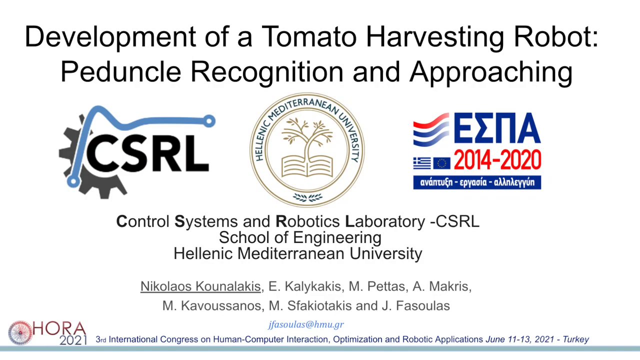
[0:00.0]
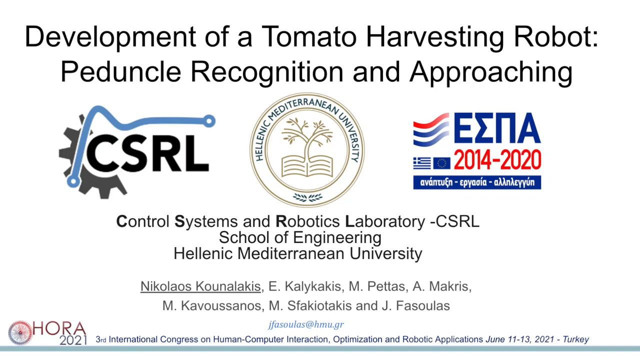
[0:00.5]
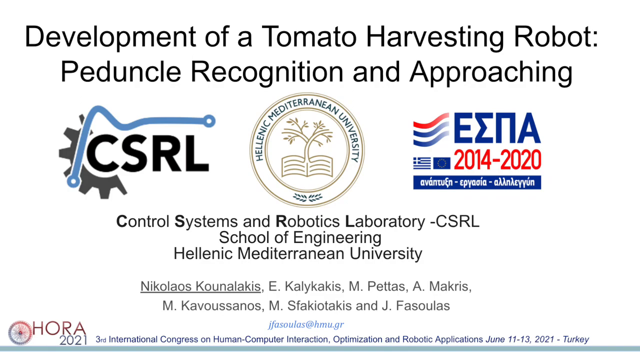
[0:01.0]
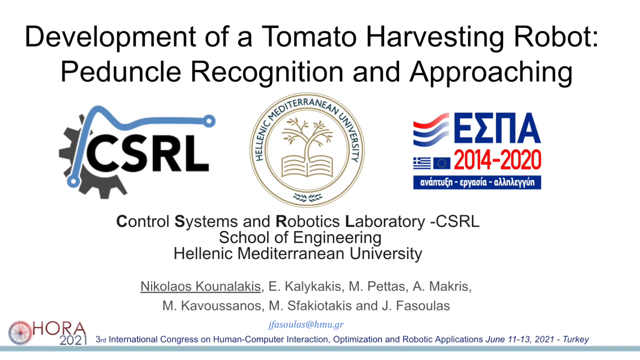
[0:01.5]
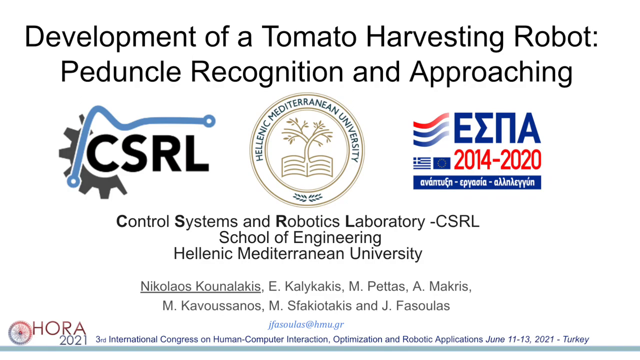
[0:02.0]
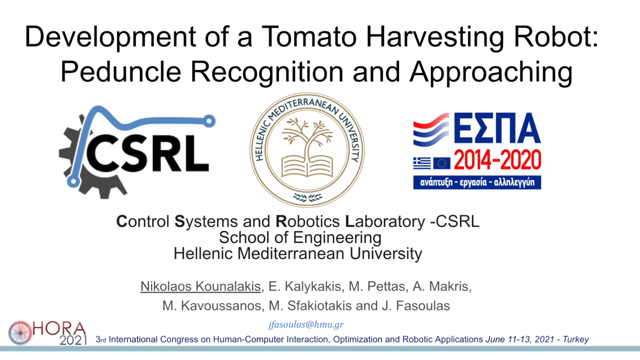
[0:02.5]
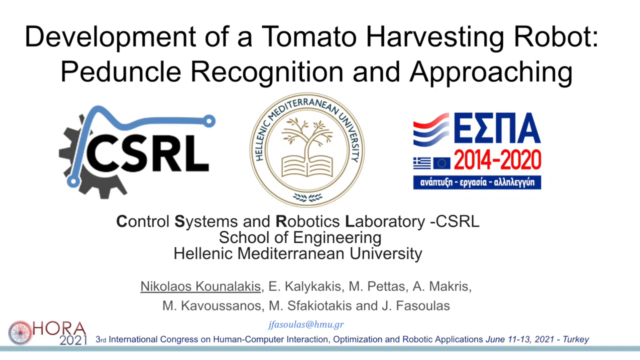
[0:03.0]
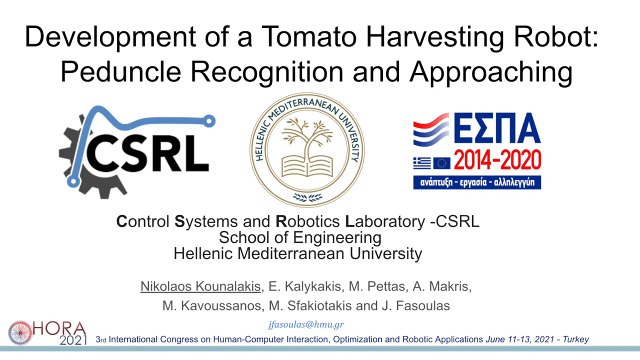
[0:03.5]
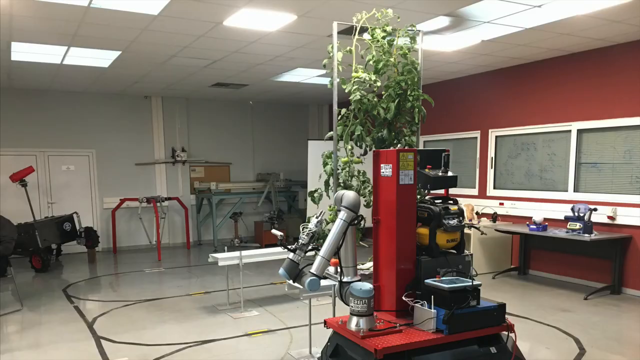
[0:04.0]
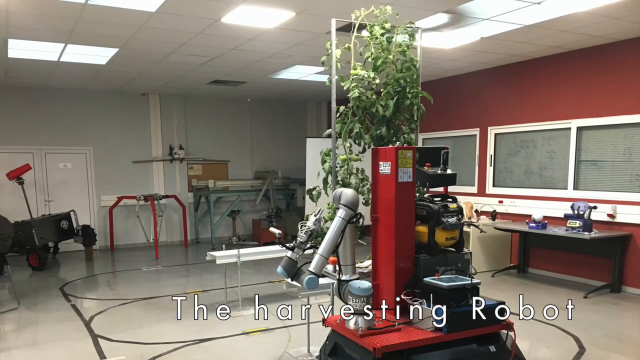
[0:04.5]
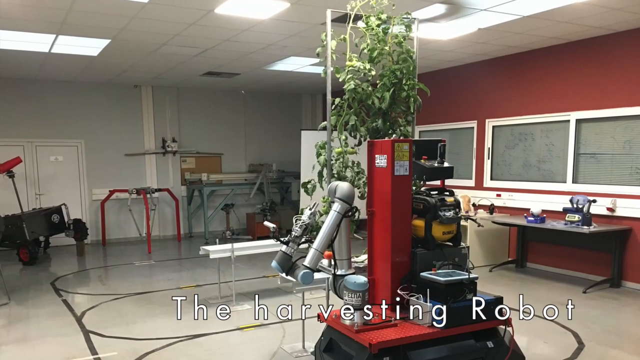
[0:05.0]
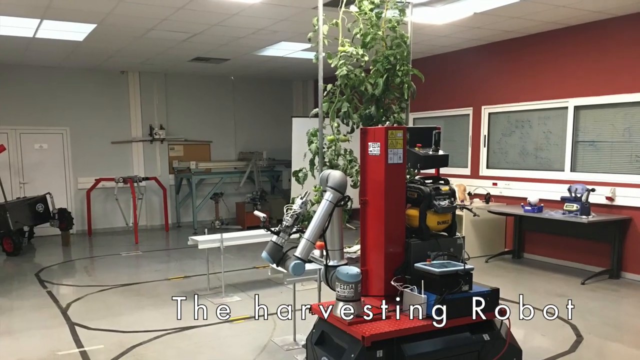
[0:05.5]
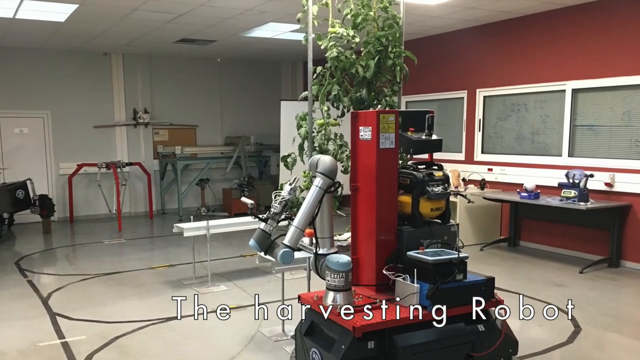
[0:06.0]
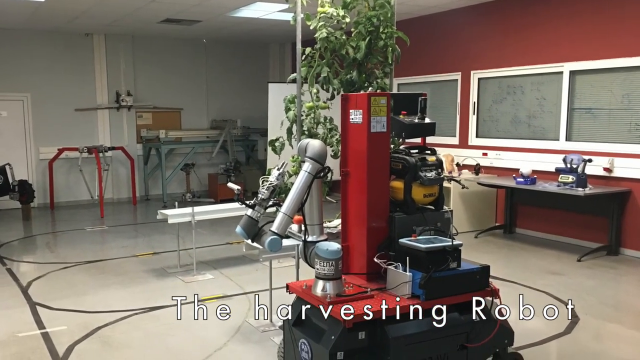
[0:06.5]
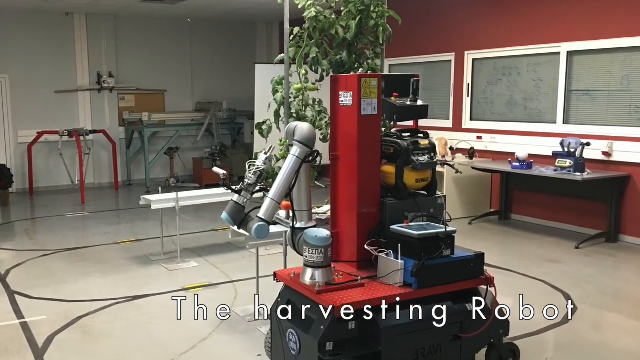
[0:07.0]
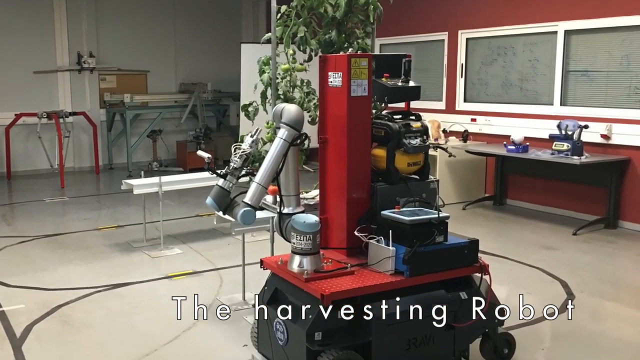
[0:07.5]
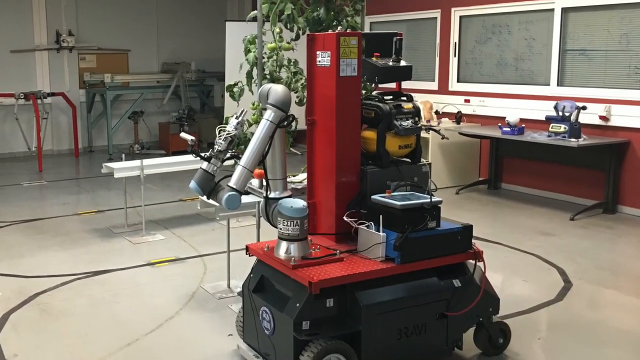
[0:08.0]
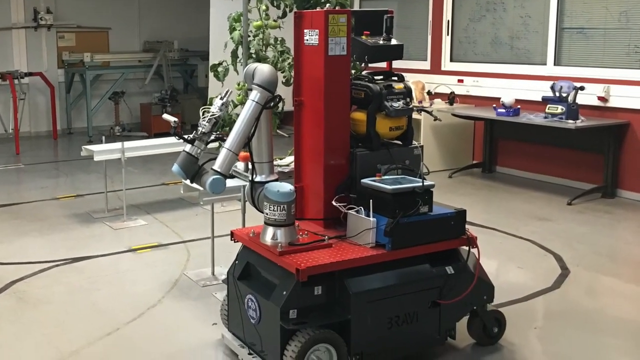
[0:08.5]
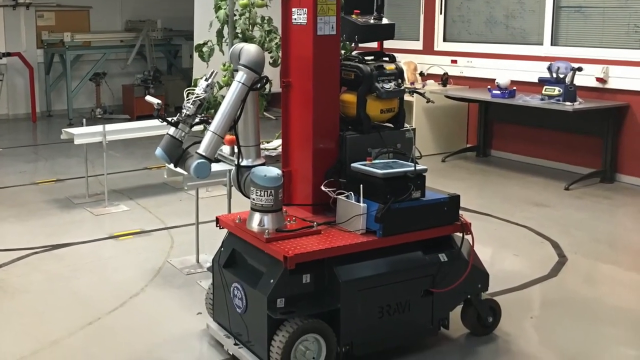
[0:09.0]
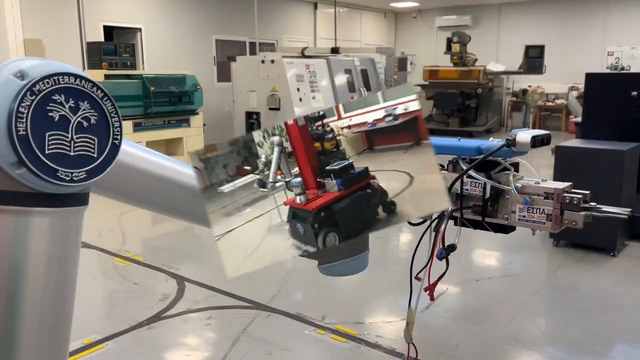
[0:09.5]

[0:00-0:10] The video opens on a still frame of what looks like a PowerPoint presentation. It has a white background and a title in black text that reads "Development of a tomato harvesting robot. Peduncle recognition and approaching." In the middle centre there are three different company logos, whose language looks like Greek. Below the logos, description text reads "Control Systems and Robotics Laboratory, CSRL, School of Engineering, Hellenic Mediterranean University." There is a list of names in Greek. The scene then changes to the inside of a laboratory area, with a robotic-looking piece of equipment in the centre.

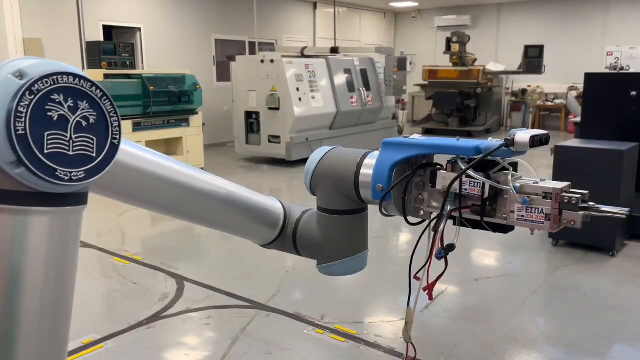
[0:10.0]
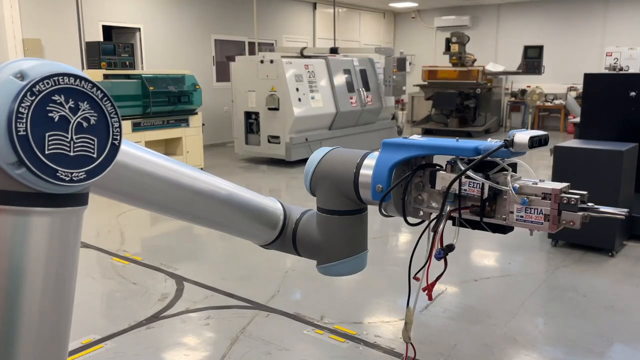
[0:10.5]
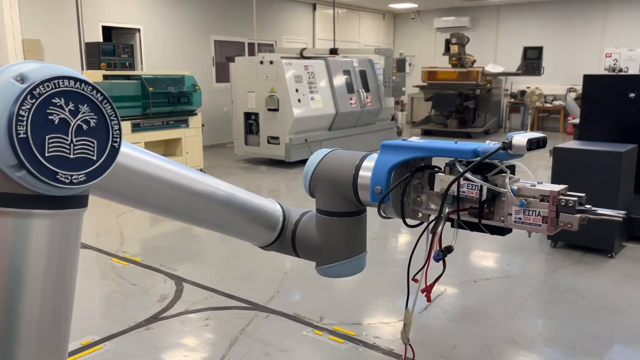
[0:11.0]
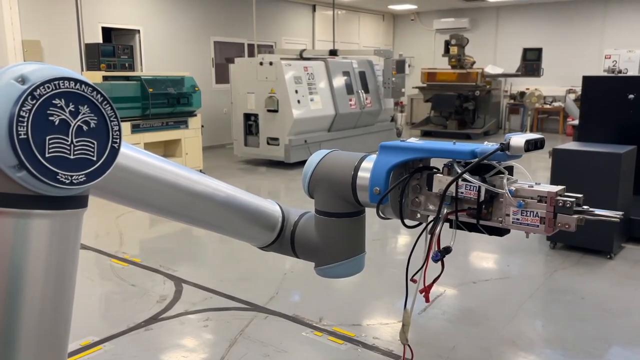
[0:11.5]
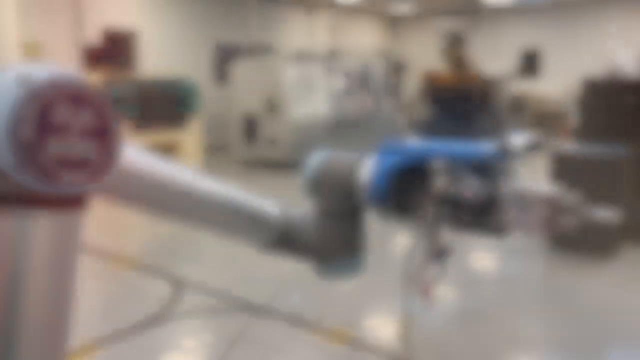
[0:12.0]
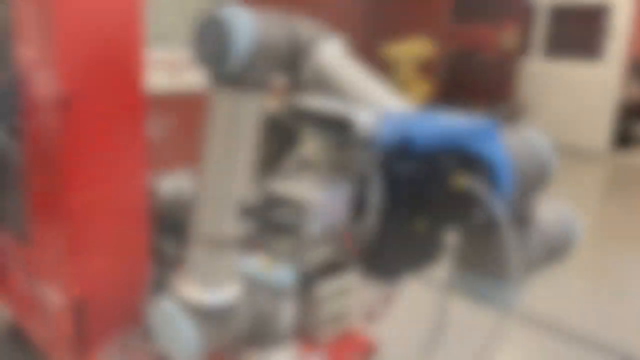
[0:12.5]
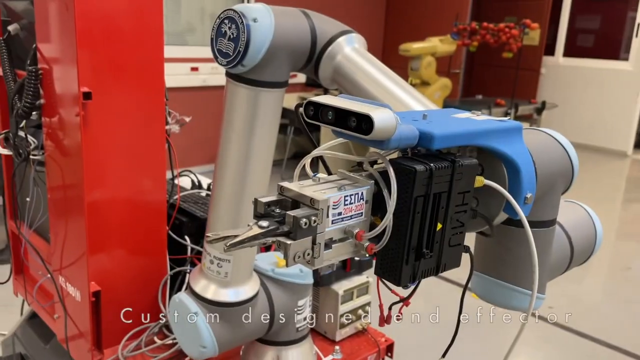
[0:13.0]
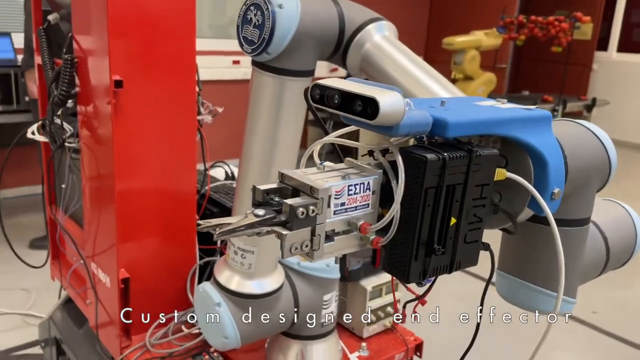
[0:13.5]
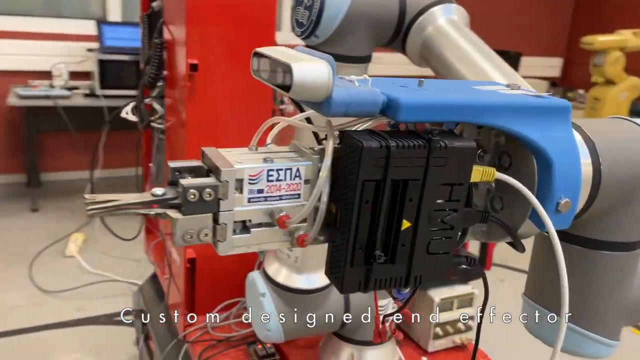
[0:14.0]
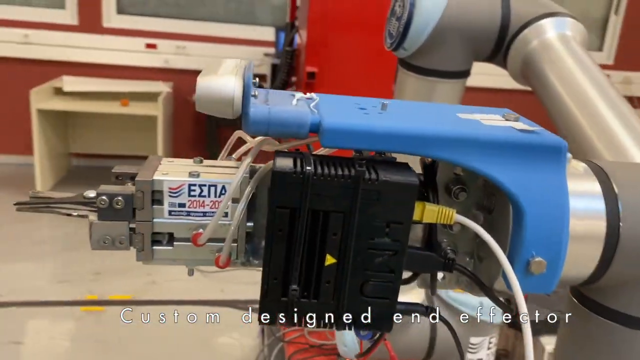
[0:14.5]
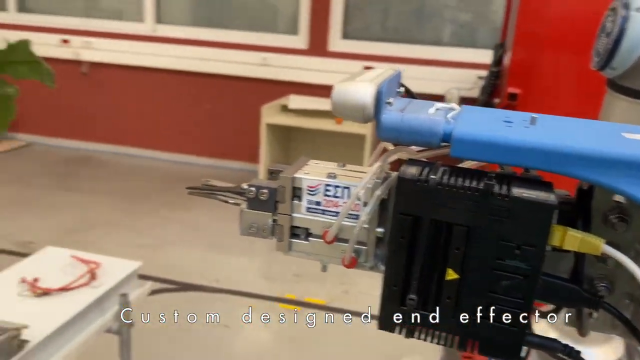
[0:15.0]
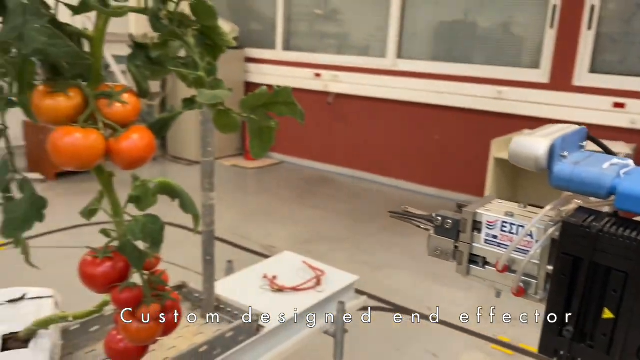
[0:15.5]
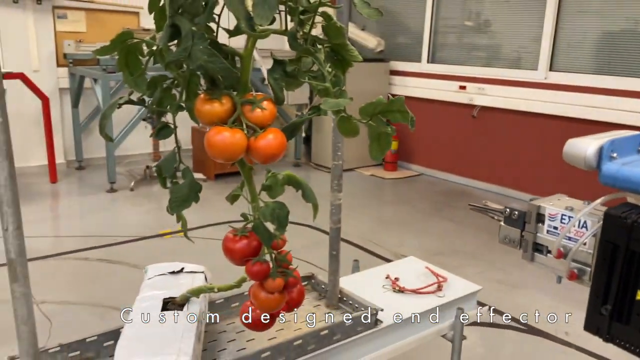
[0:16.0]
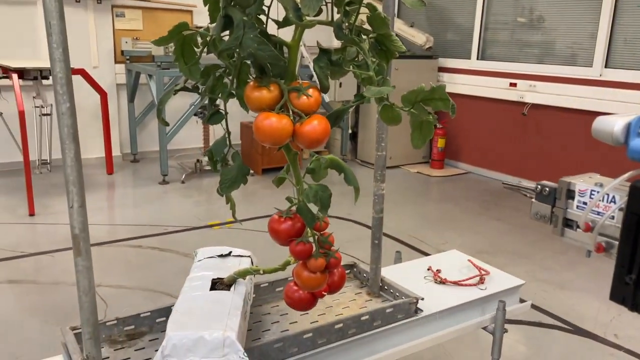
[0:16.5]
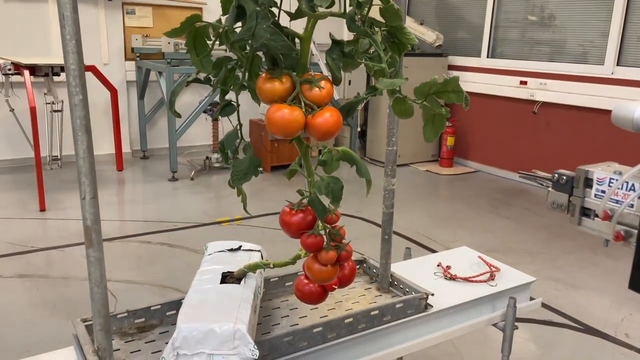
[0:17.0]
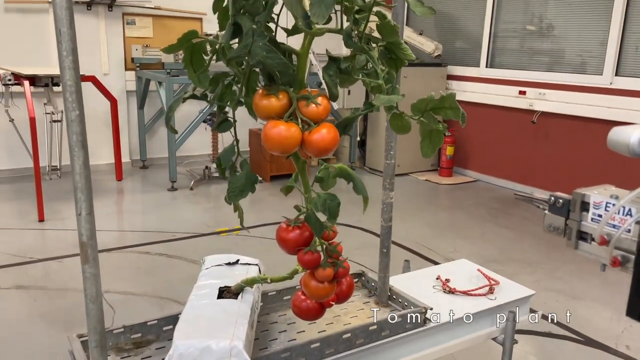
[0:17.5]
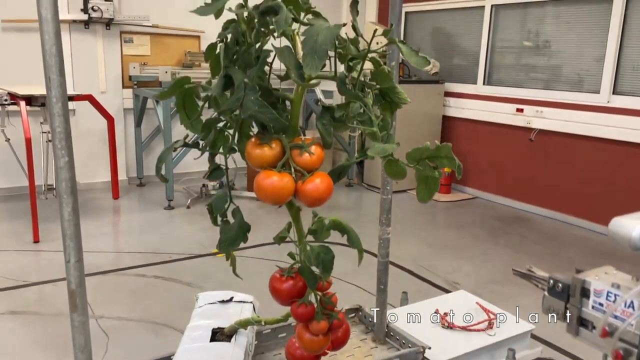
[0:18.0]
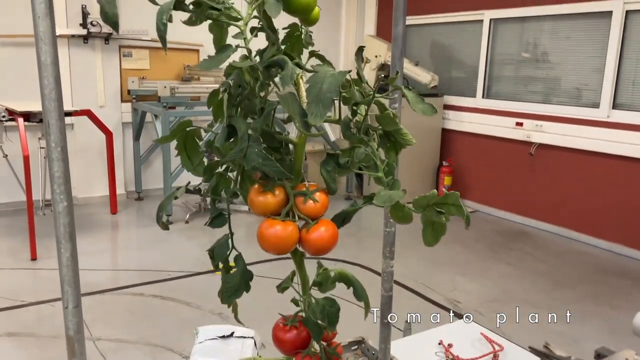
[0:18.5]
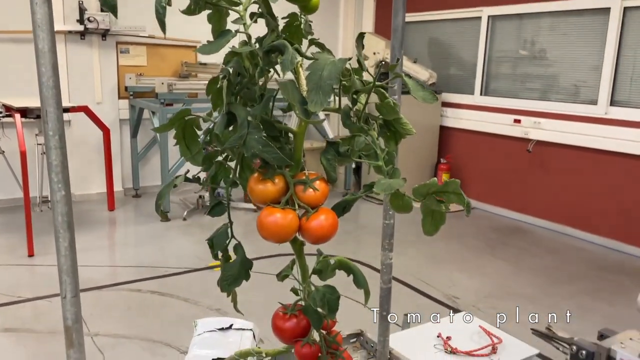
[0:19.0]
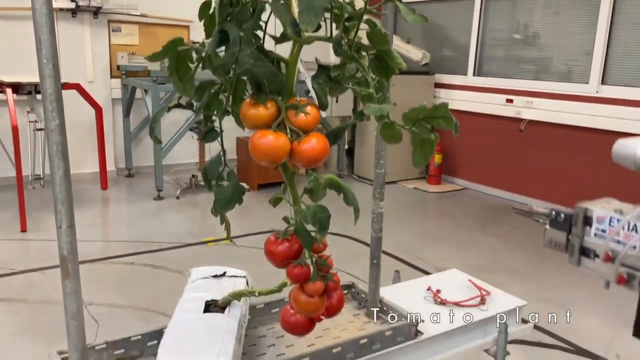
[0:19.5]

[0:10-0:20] A large scientific laboratory-style area is shown, with the video zoomed in on a piece of robotic equipment. The equipment looks like it has a robotic arm with a precision point at the end, and there is a logo on it for the Hellenic Mediterranean University. The camera pans to a different view showing the robotic equipment pointing in the direction of a tomato plant. The tomato plant is growing through a growing bag, and about 10 quite large tomatoes hang from this branch. The plant has been placed between 2 metal poles.